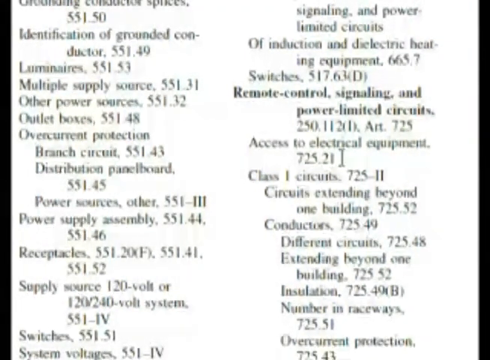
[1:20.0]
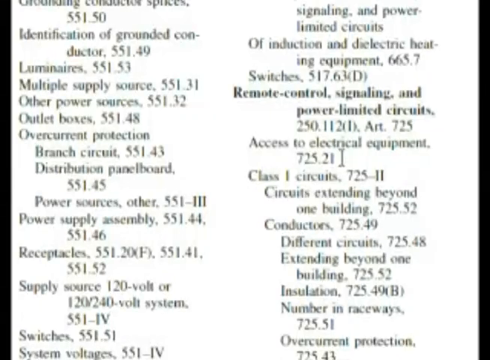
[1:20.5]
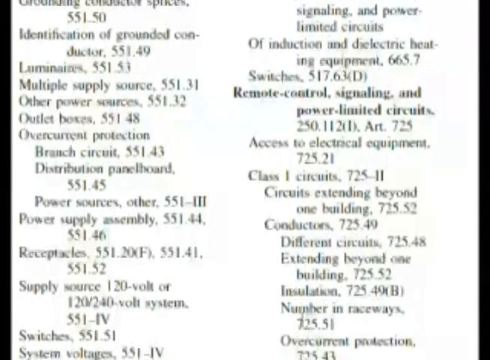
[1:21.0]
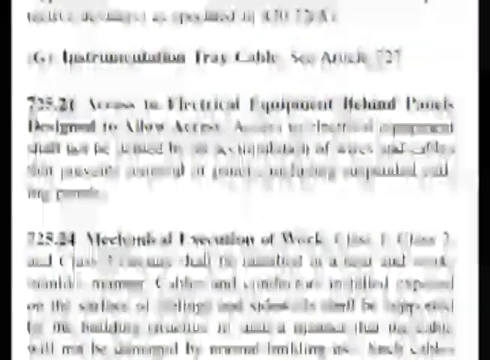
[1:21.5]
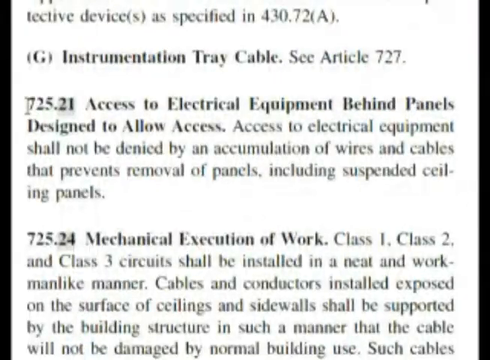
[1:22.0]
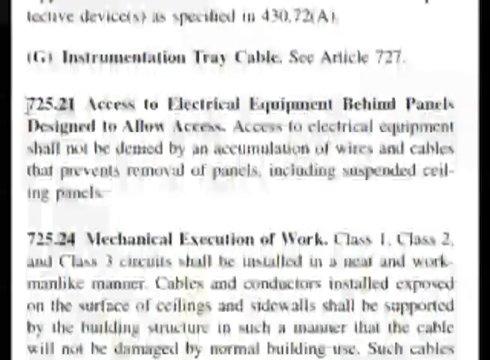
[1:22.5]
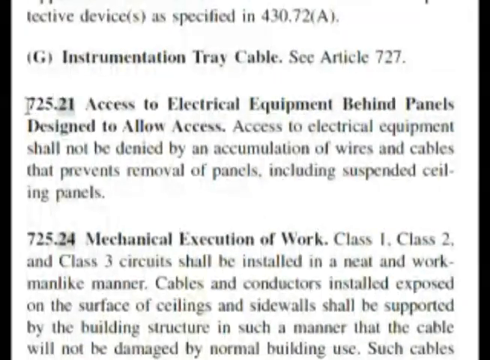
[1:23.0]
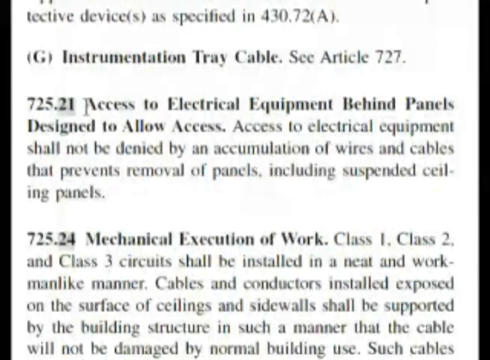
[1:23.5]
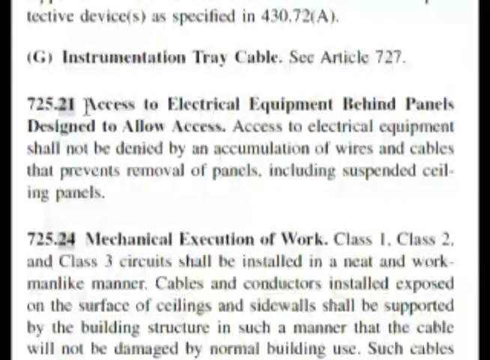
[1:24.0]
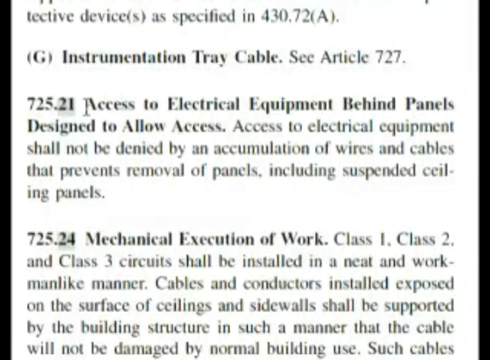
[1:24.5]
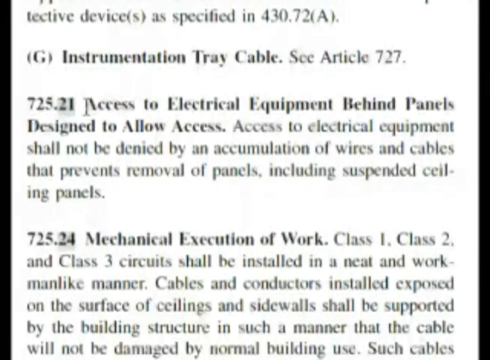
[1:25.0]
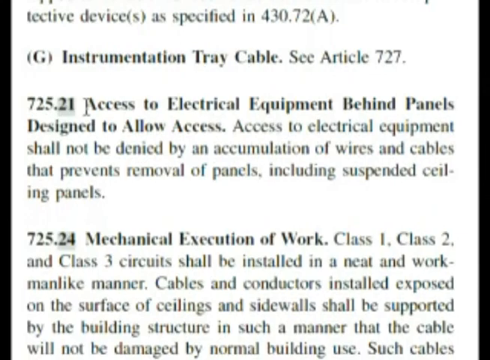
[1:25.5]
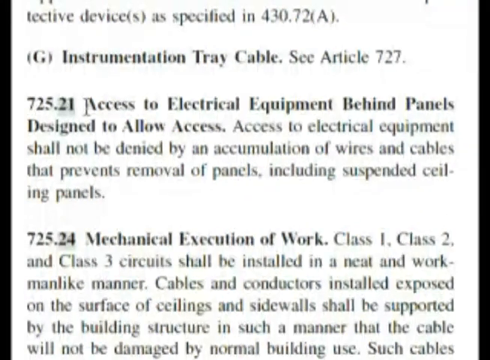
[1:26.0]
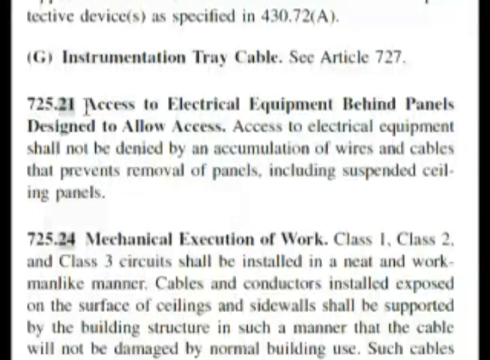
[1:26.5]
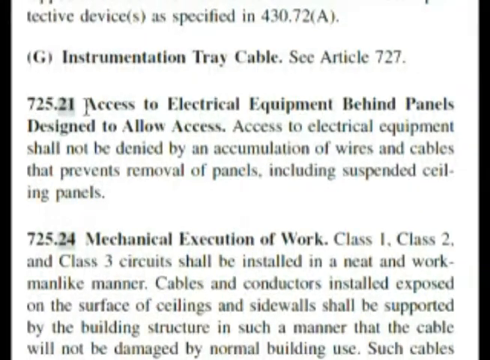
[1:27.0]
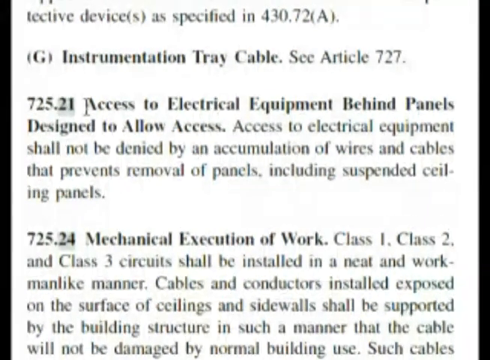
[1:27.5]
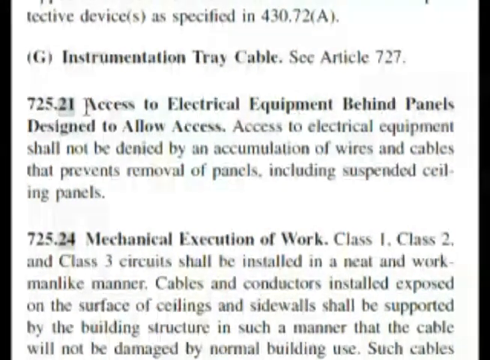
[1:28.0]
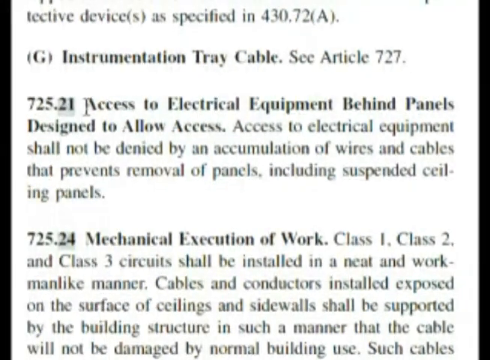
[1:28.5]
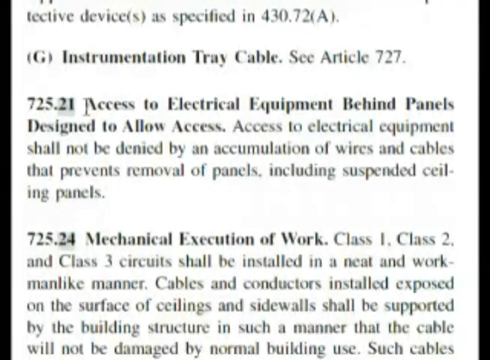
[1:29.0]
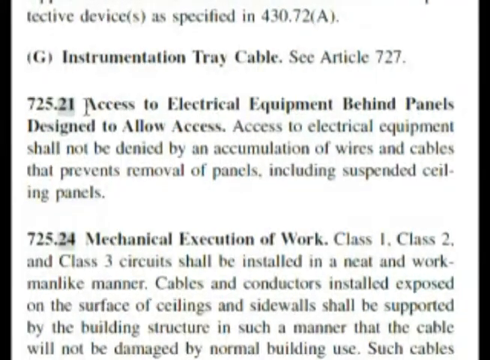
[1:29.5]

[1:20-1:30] A list of pages is shown, with entries including "access to class one circuits," "power sources," "switches," "remote control signaling, and power limited circuits," and raceways, with numbers next to them. The view then goes to a page with section 725.21, which reads "Access to electrical equipment behind panels designed to allow access. Access to electrical equipment shall not be denied by an accumulation of wires, cables that prevents removal of panels, including suspended ceiling panels." Below that is 725.24, "mechanical execution of work," reading "Class one, class two, and class three circuits shall be installed in a neat and workman-like manner."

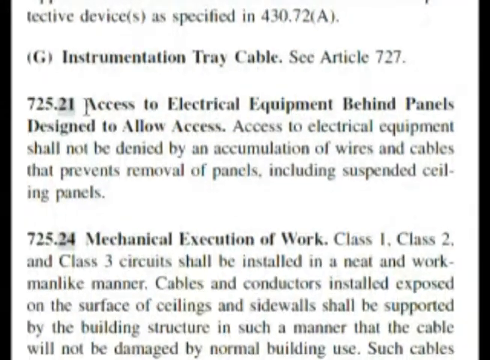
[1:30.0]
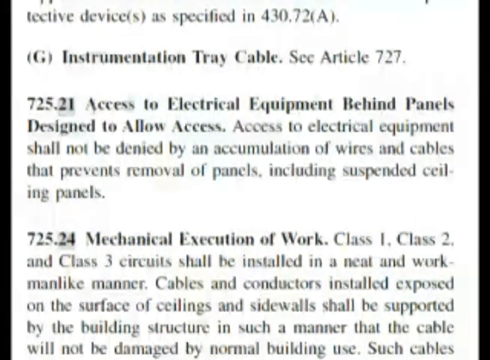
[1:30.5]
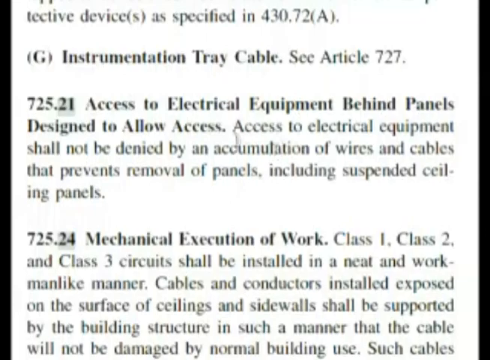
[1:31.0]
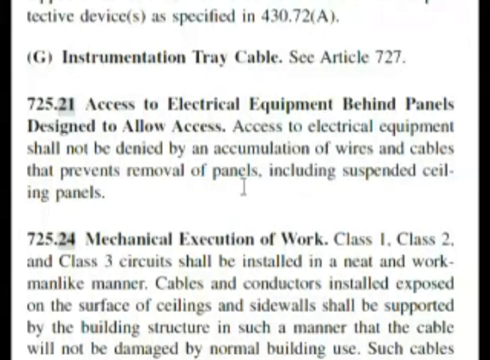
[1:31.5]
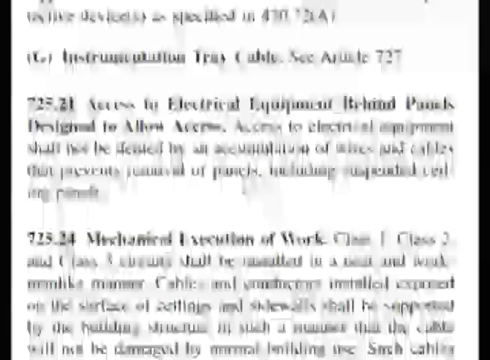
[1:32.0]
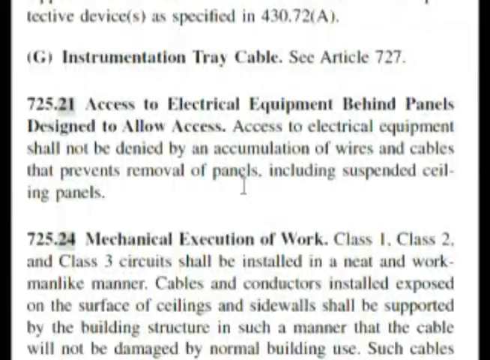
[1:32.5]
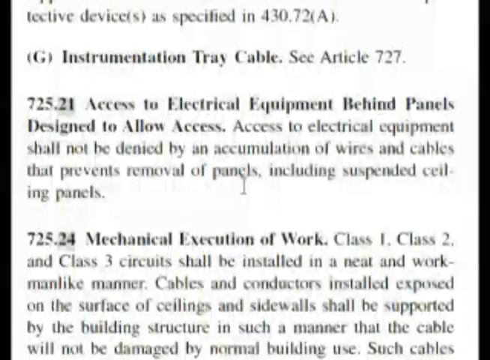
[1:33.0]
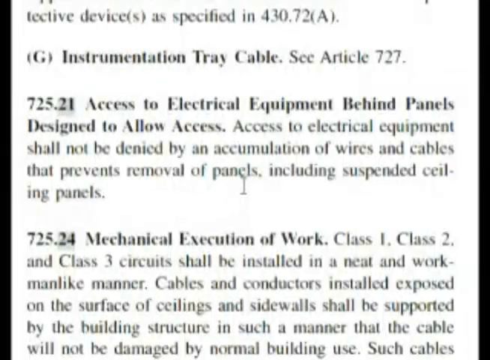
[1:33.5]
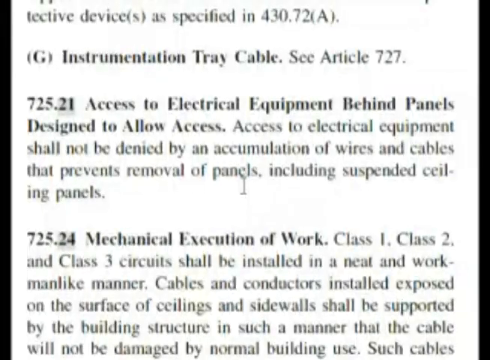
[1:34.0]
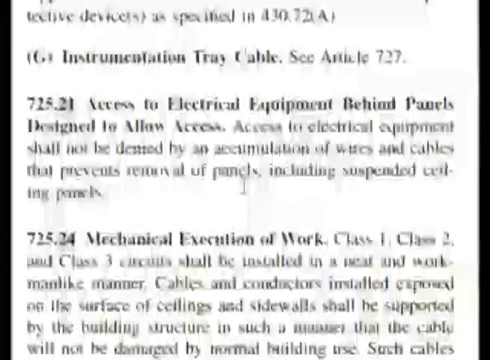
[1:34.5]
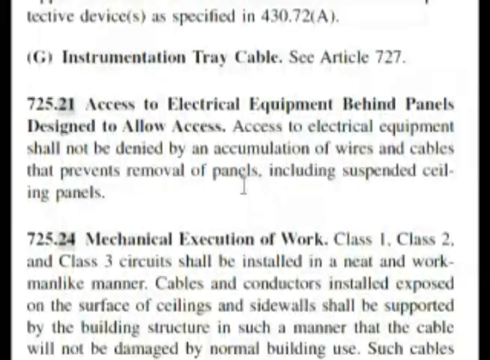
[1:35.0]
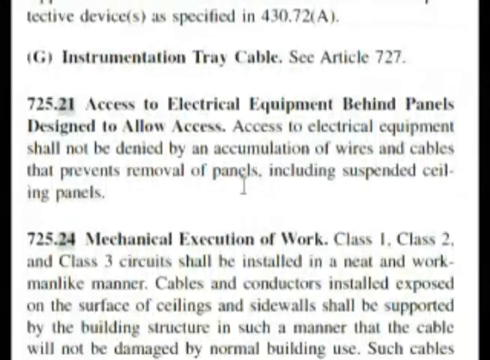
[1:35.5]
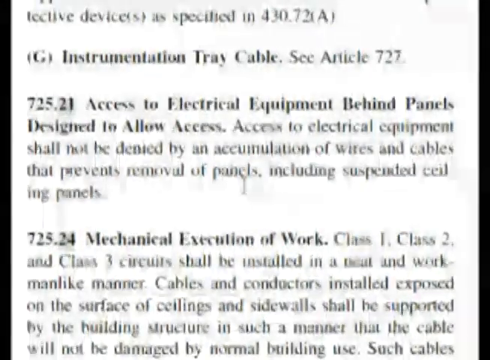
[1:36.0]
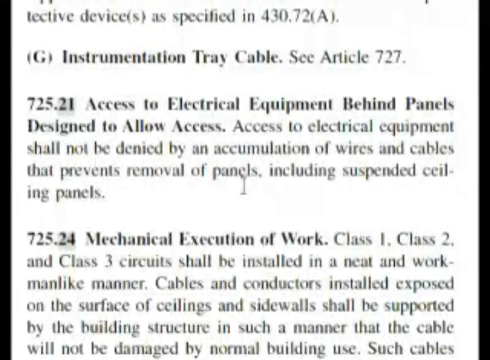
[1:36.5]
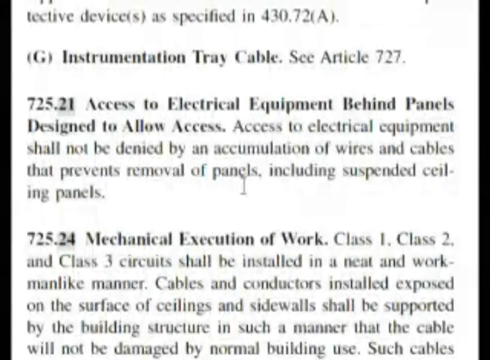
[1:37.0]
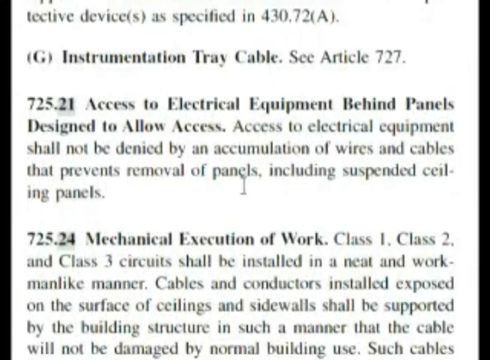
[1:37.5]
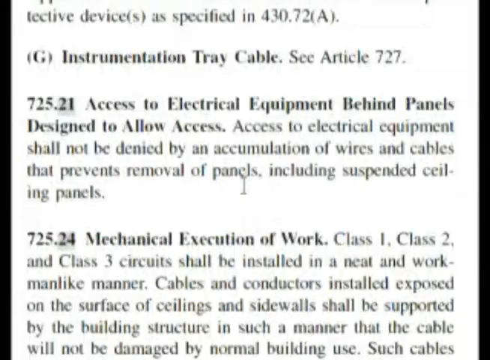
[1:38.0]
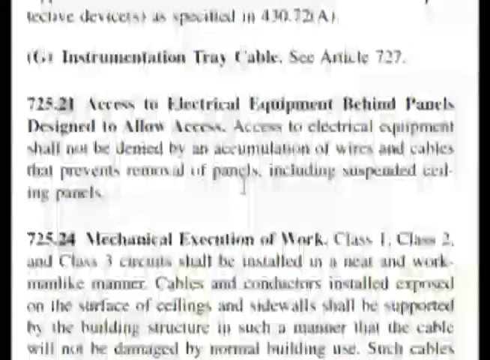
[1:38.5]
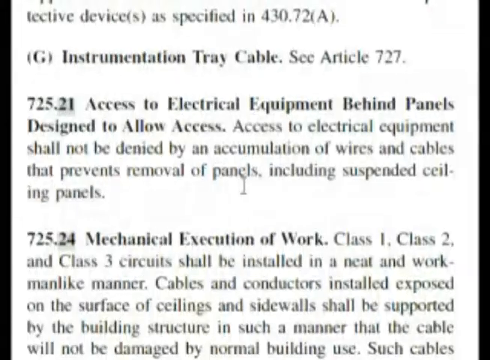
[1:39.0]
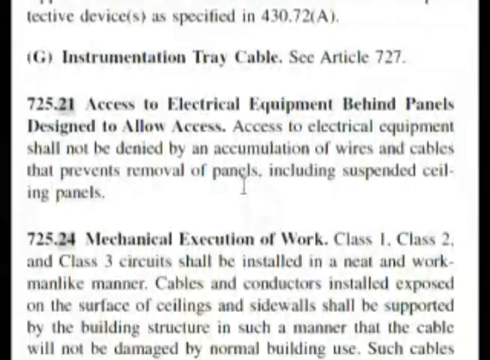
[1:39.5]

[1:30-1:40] Lines of black text appear on a white background, including "instrumentation tray cables, article 727." Article 725.21 reads "access to electrical equipment behind panels designed to allow access. Access to electrical equipment shall not be denied by accumulation of wires and cables that prevents removal of panels, including suspending ceiling panels." Below it is 725.24, "mechanical execution of work," stating "class one, class two, class three circuits shall be installed in a neat and workman-like manner." The user of the site is engaging with this information to answer the question.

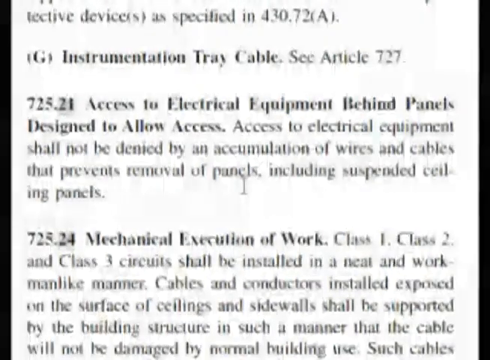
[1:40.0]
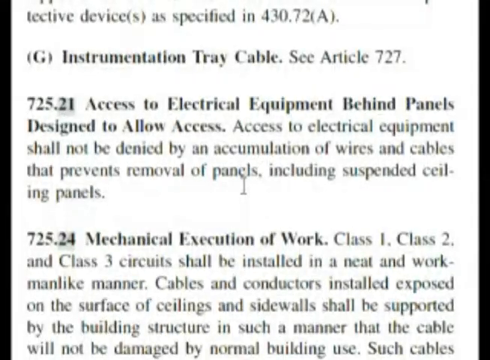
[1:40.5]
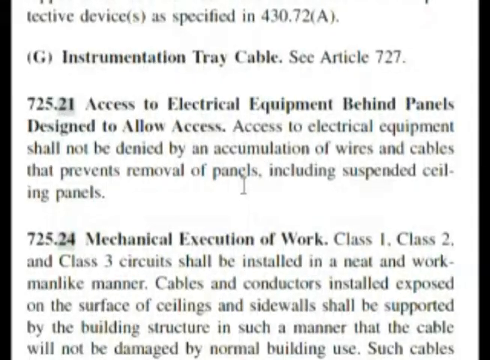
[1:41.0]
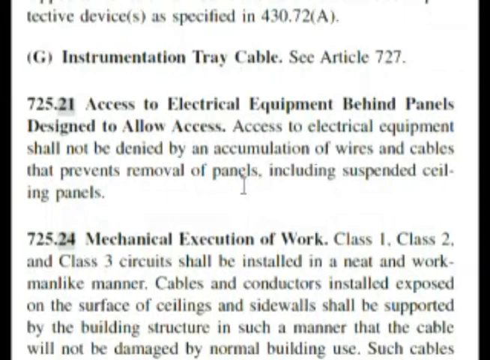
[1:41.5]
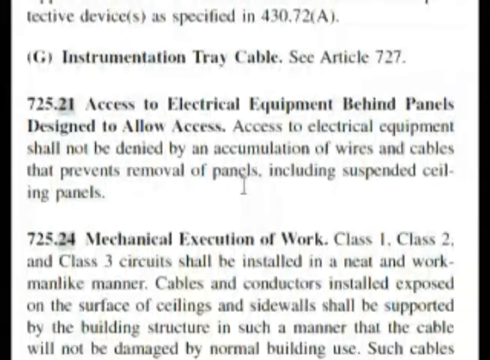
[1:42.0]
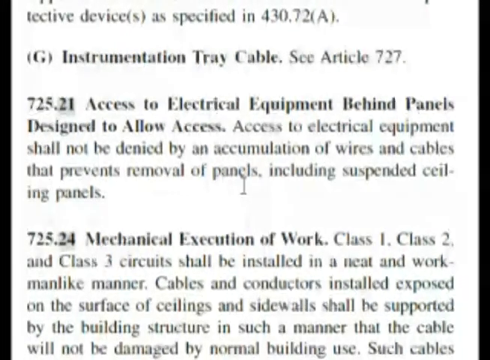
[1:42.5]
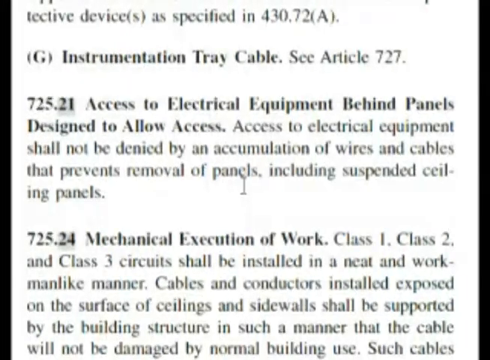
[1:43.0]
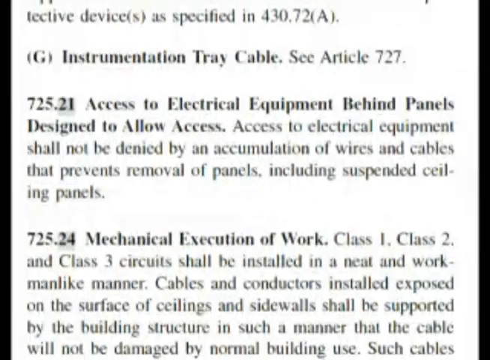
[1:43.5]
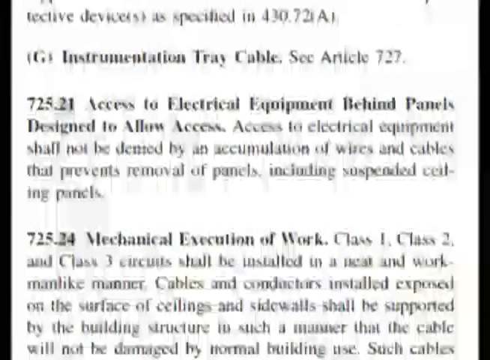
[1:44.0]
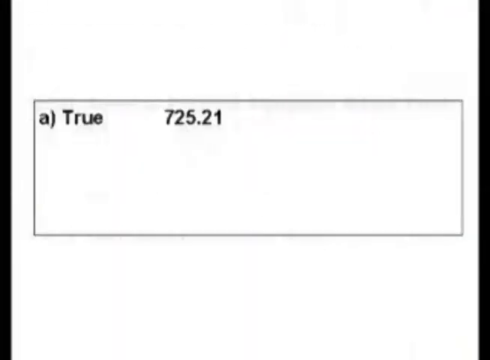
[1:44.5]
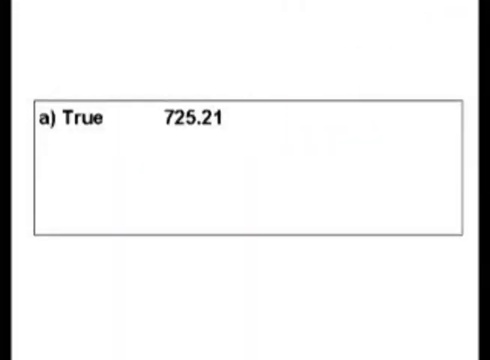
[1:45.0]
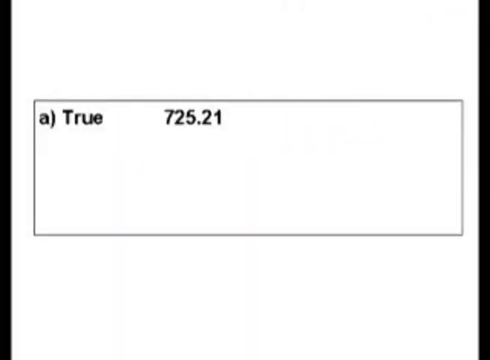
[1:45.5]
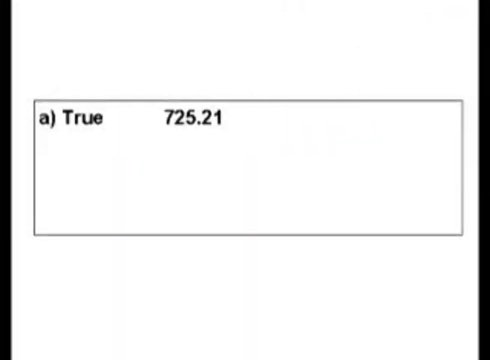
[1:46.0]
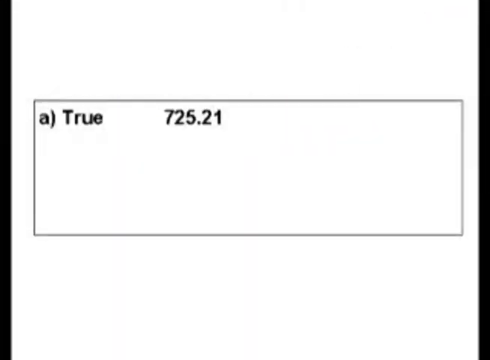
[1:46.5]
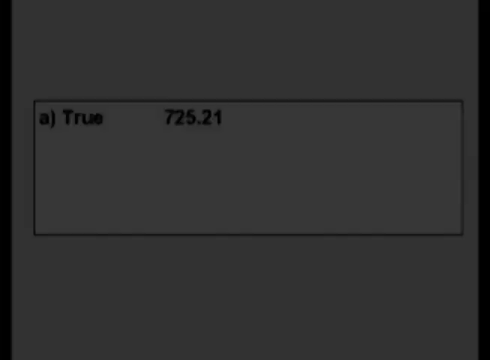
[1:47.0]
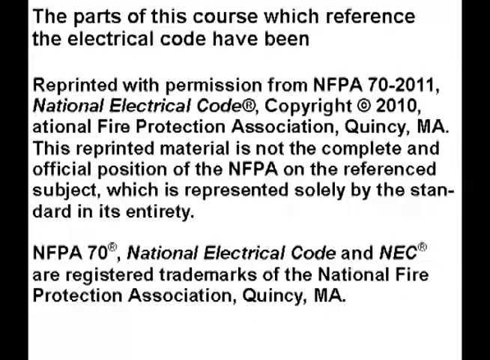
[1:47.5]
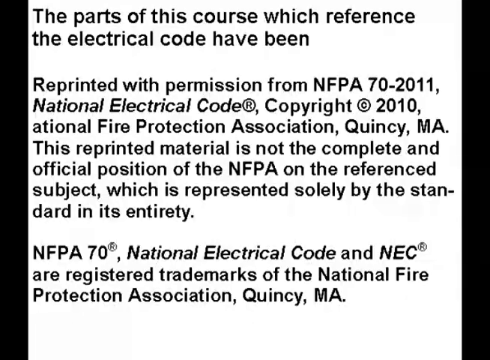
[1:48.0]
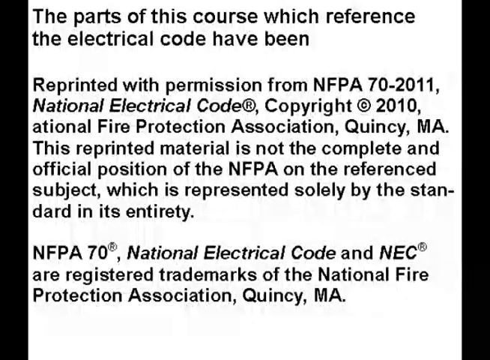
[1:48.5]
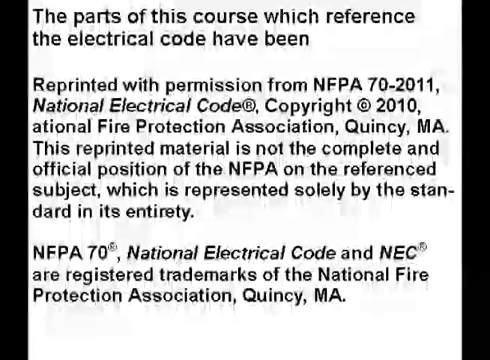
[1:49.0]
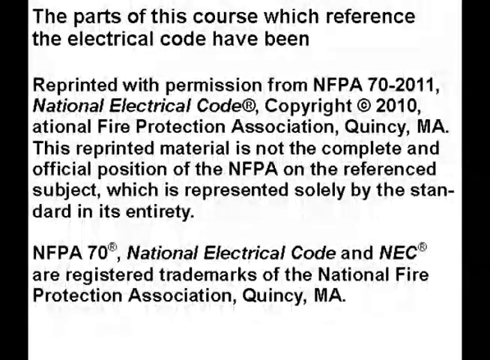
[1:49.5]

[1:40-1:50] The text about instrumentation tray cables in article 727 and article 725.21 on access to electrical equipment behind panels designed to allow access remains on screen, followed by 725.24 on class 1, class 2 and class 3 circuits. Option A, true, appears to be supported by article 725.21. The view then moves to text stating that parts of this course referring to the electrical code have been reprinted with permission from NFPA 70-2011, National Electrical Code, copyright 2010, and that "NFPA 70 National Electrical Code and NEC are registered trademarks of the National Fire Protection Association."